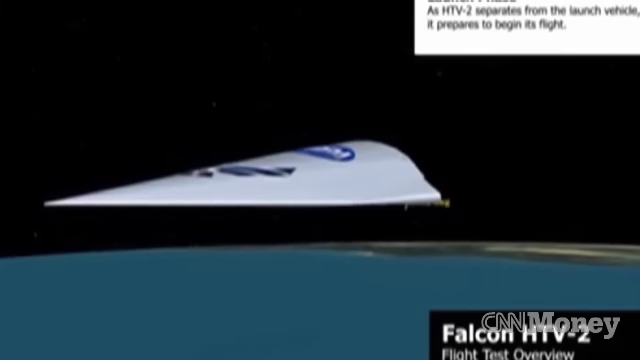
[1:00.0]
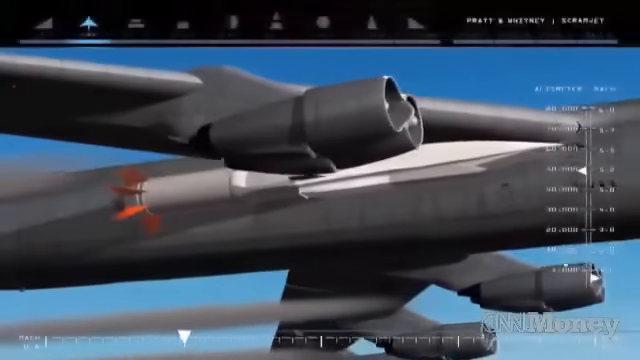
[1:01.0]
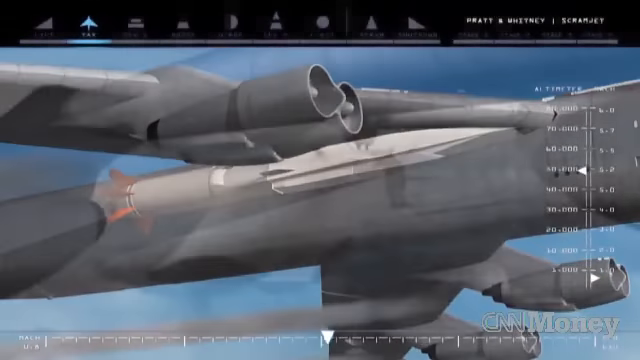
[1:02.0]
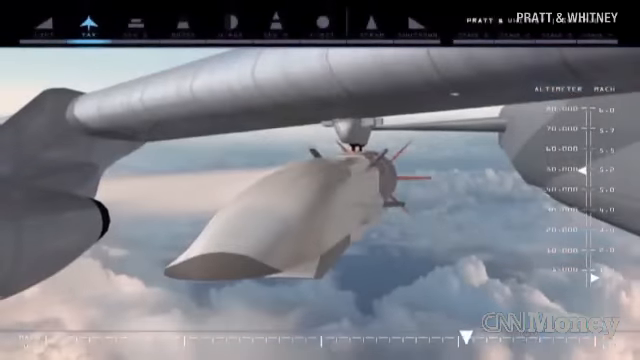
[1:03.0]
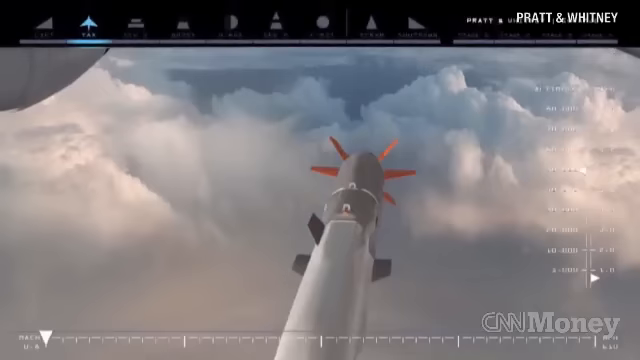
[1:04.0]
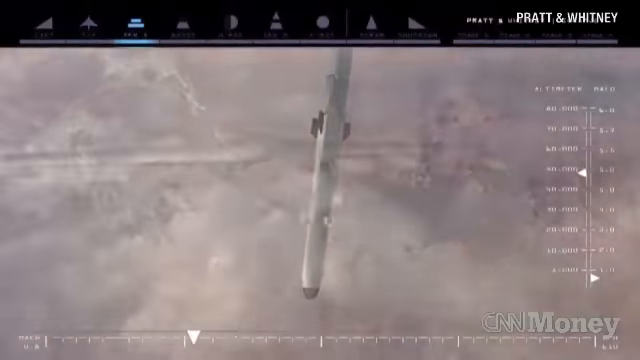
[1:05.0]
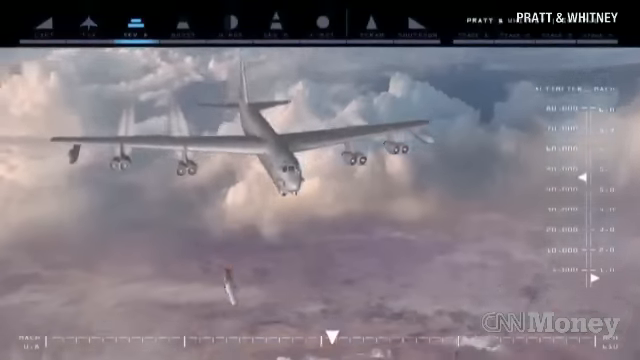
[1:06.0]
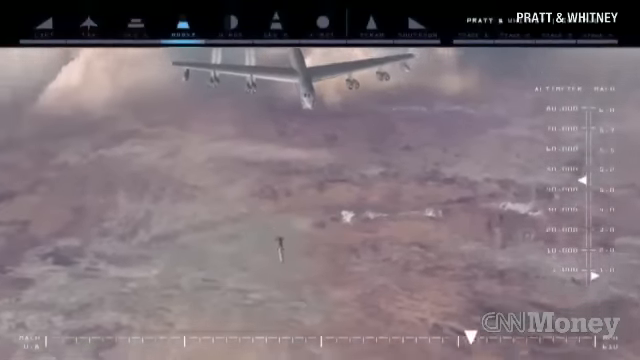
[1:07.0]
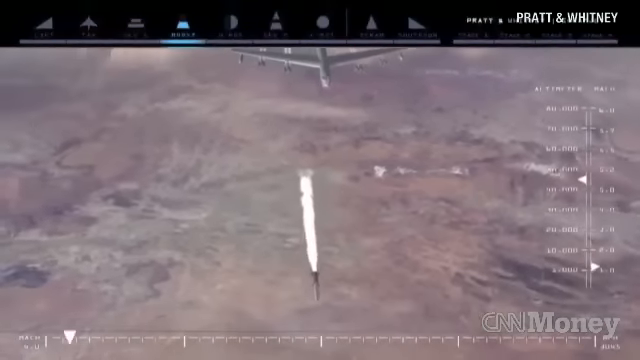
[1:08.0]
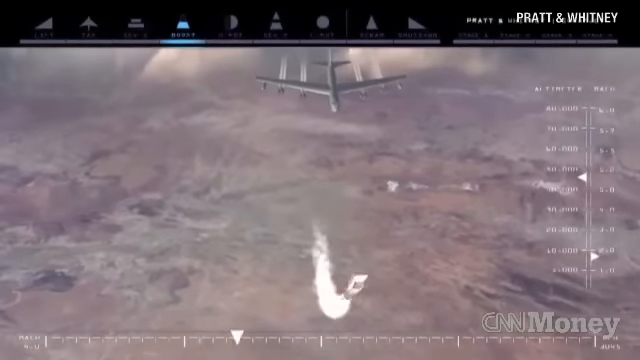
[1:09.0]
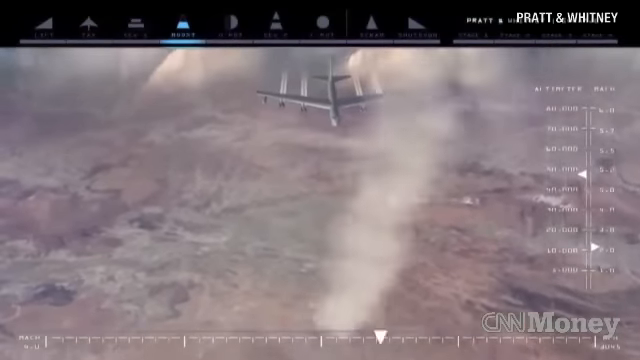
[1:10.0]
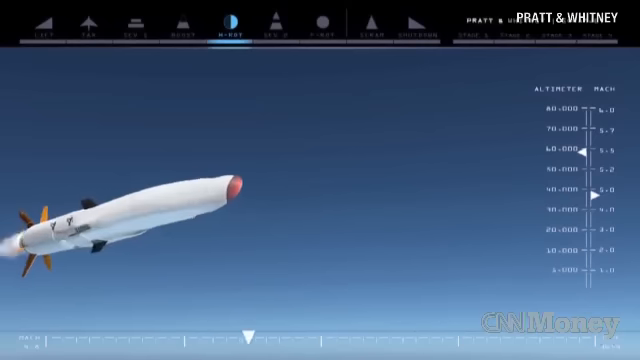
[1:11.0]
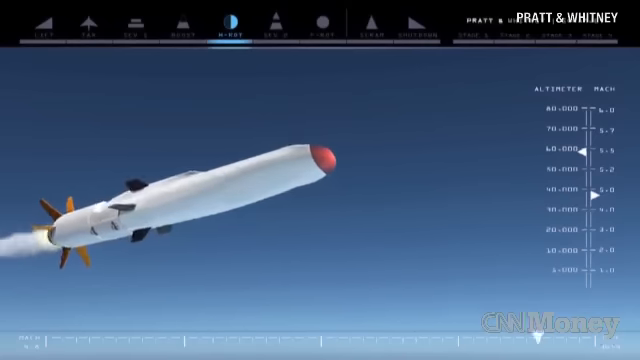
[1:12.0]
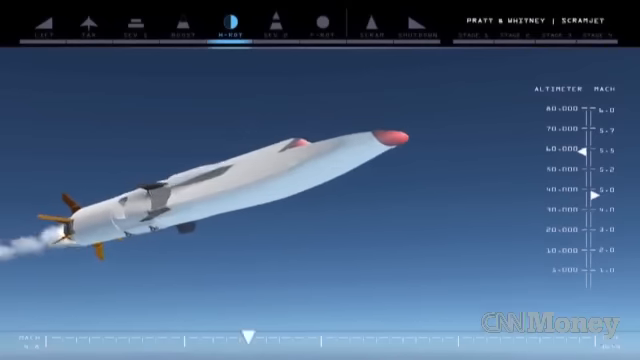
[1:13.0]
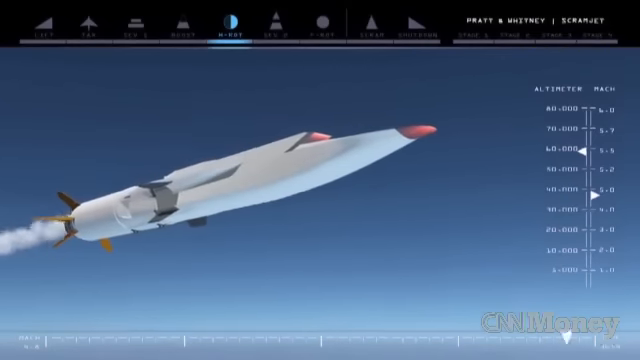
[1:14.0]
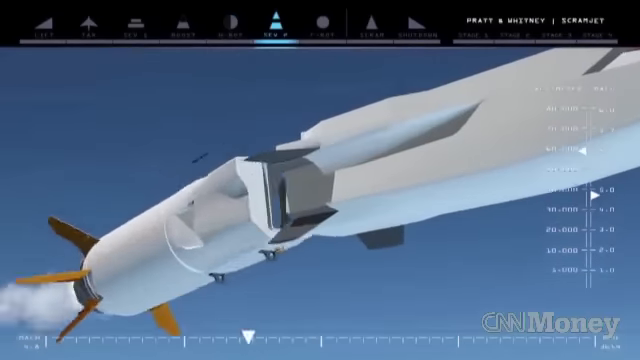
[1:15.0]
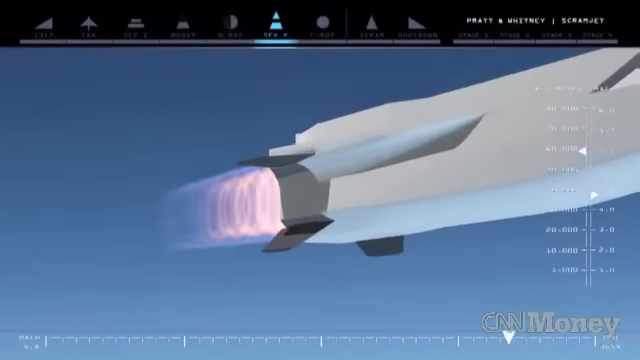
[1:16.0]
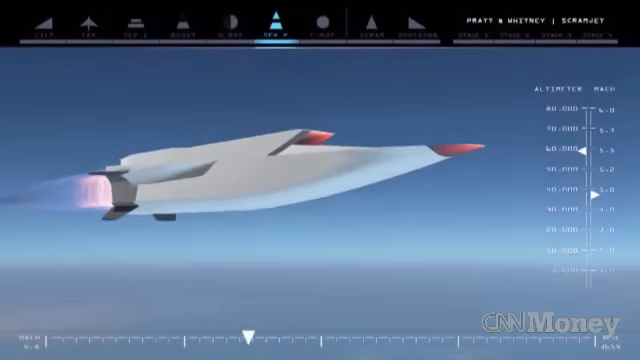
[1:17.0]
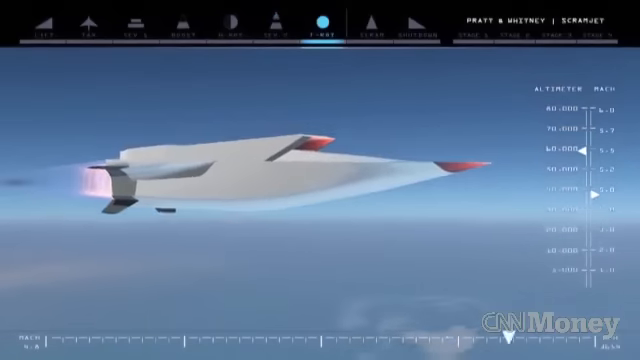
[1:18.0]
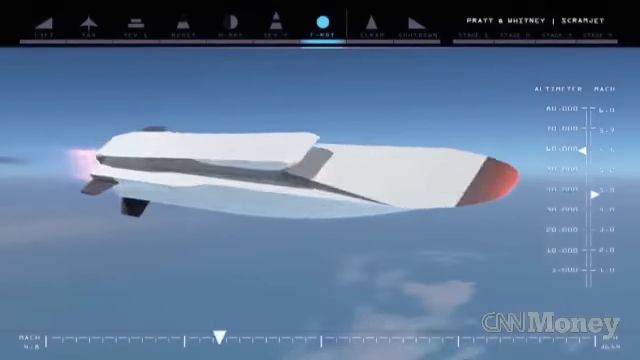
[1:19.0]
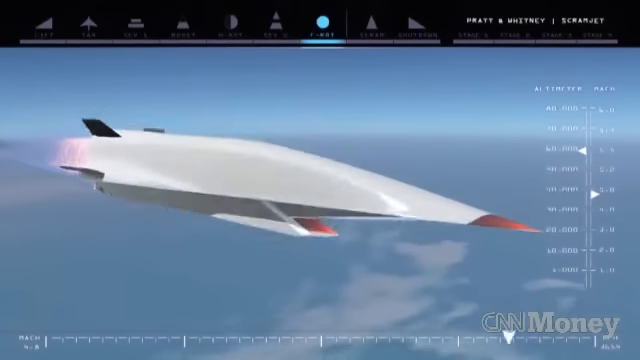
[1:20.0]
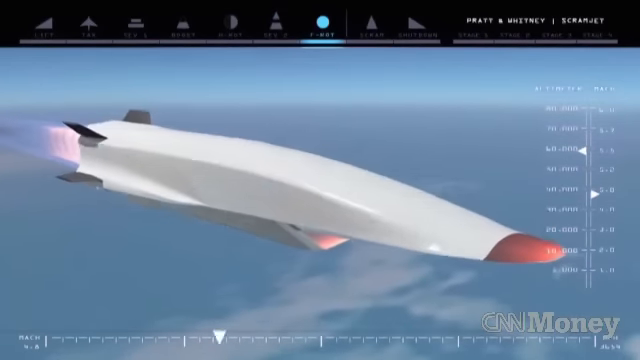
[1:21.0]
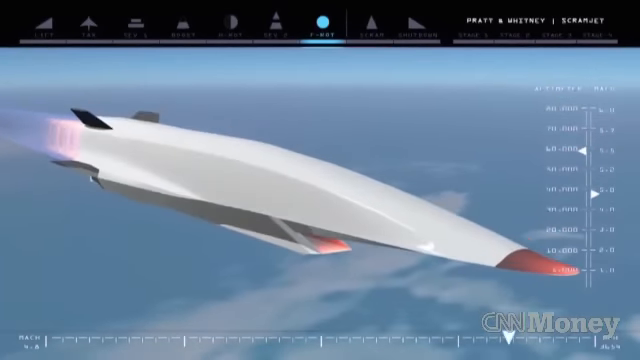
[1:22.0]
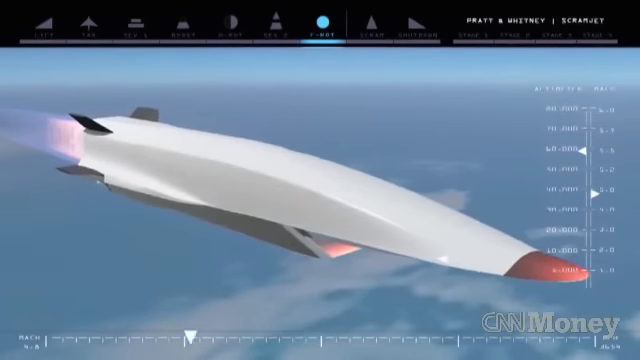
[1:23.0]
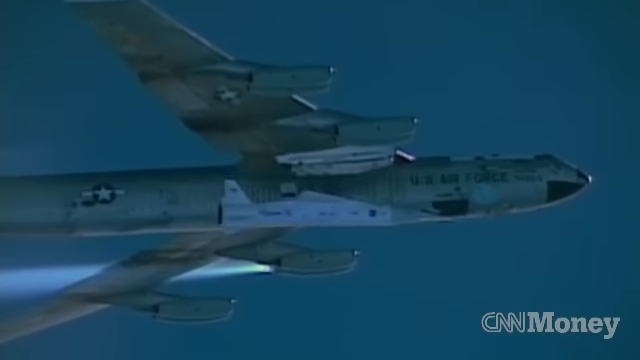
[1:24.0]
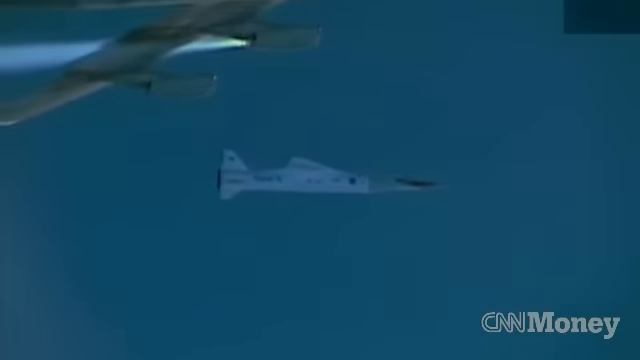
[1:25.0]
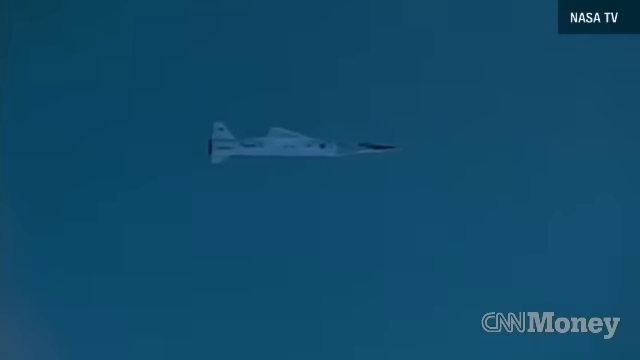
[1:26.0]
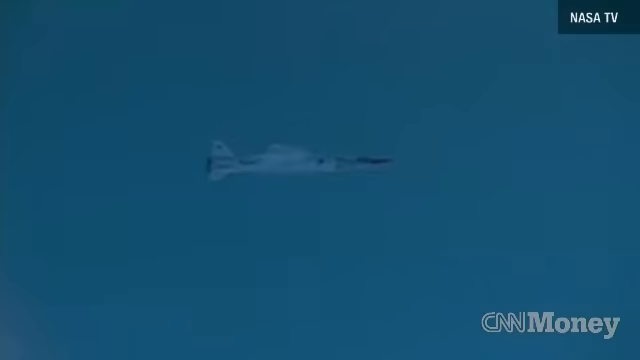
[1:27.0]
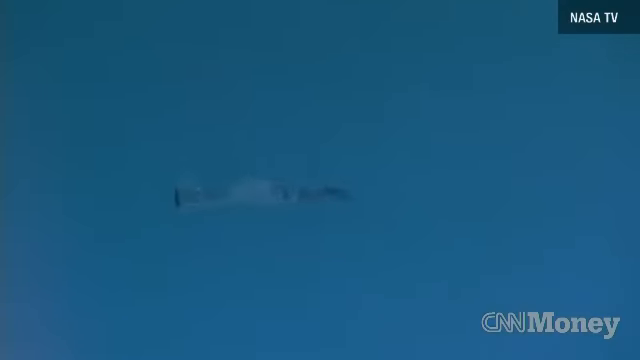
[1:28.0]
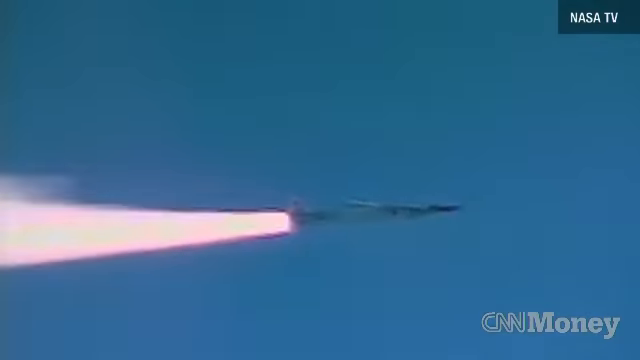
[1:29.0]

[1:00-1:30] Text in the right-hand corner reads "as HTV-2 separates from the launch vehicle, it prepares to begin its flight," and on the left the vehicle has separated and is beginning its flight. An airplane then drops, shown in a sped-up version, turning over and spinning. The Air Force is shown dropping what looks to be a plane, which takes off very quickly with jet fuel visible behind it. The video then returns to First Lieutenant Barbosa of the U.S. Air Force in the lab, speaking.